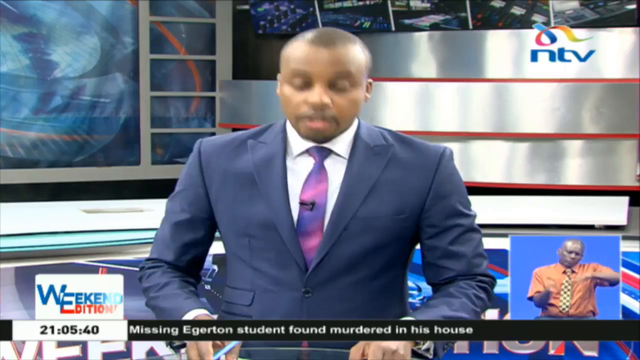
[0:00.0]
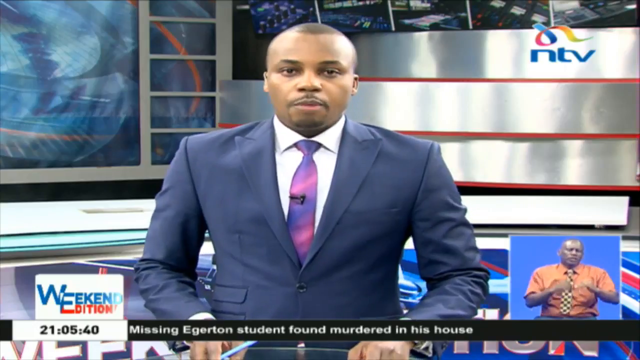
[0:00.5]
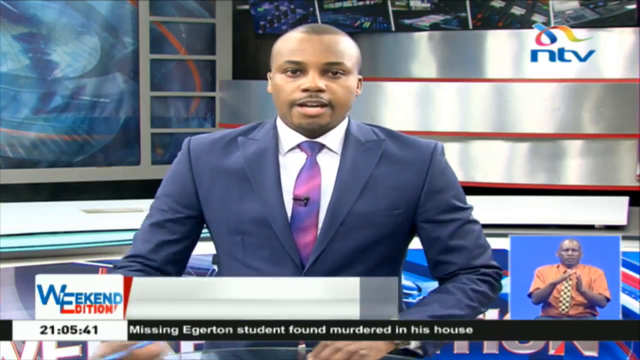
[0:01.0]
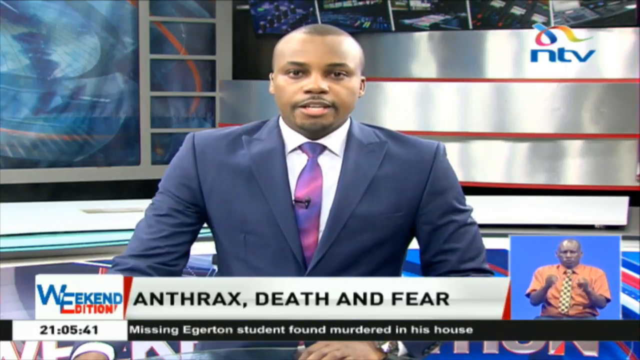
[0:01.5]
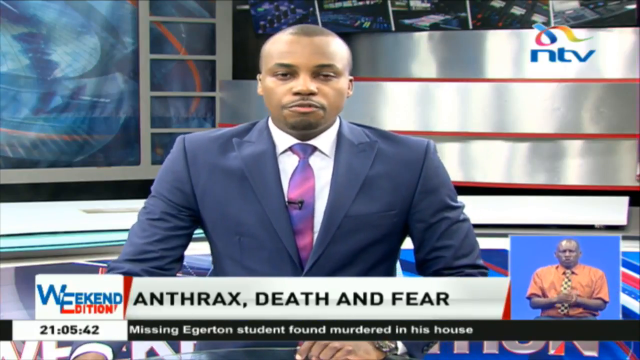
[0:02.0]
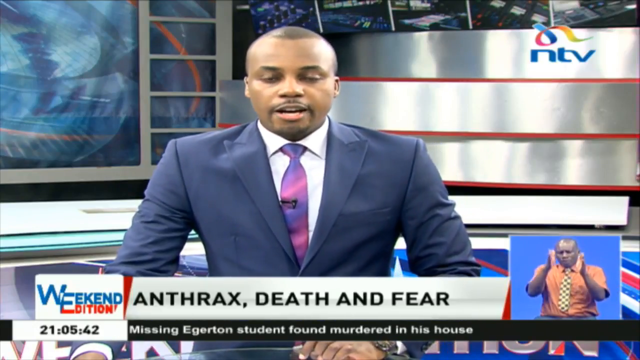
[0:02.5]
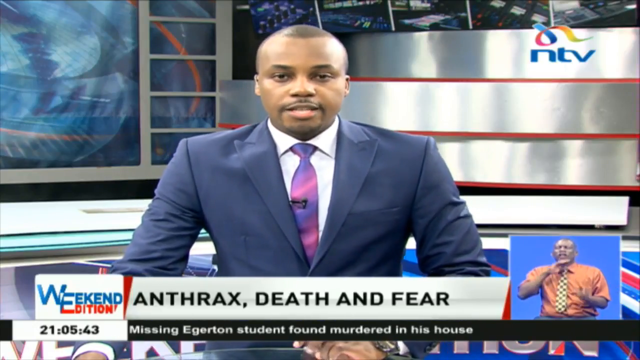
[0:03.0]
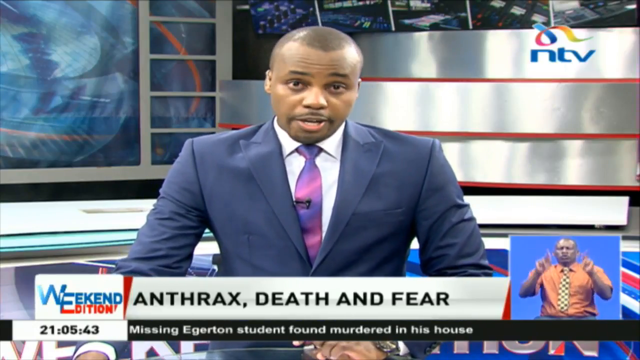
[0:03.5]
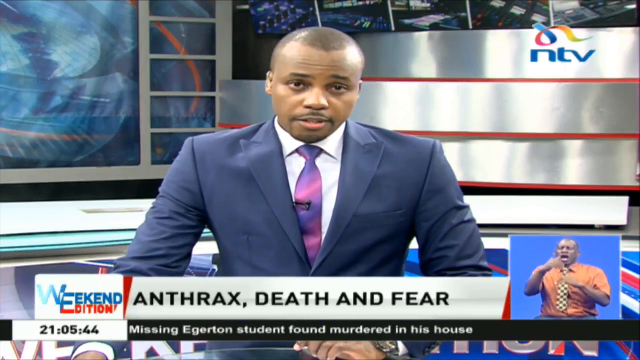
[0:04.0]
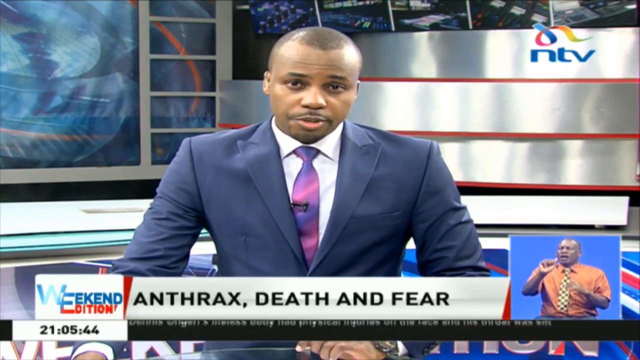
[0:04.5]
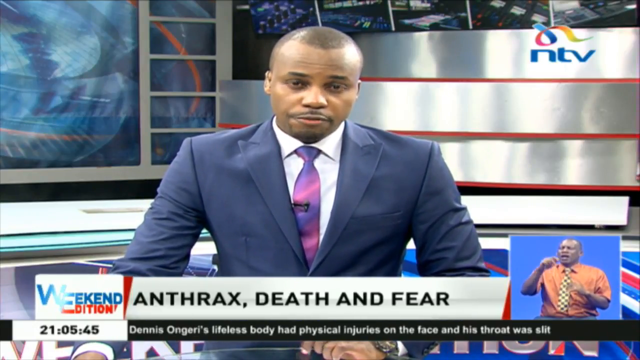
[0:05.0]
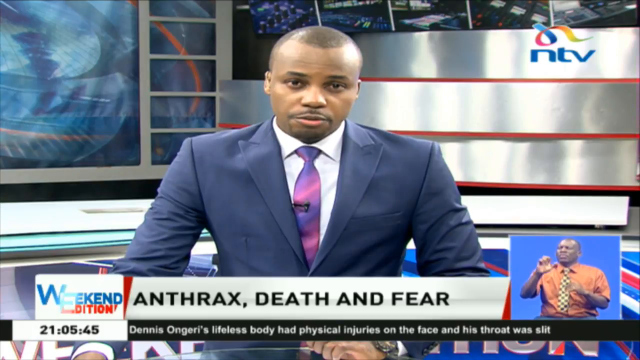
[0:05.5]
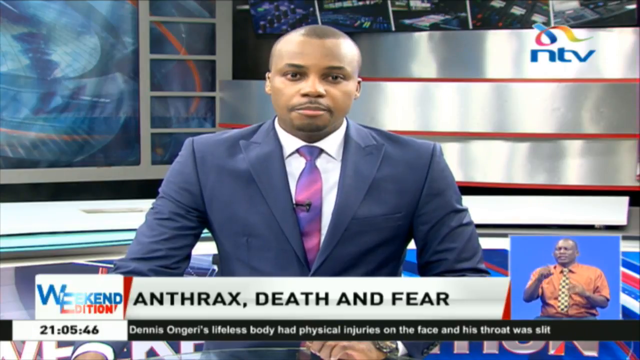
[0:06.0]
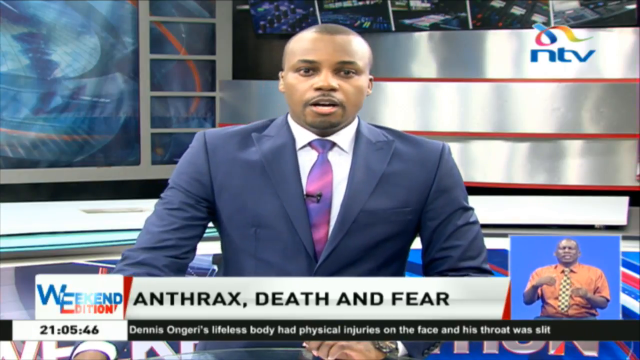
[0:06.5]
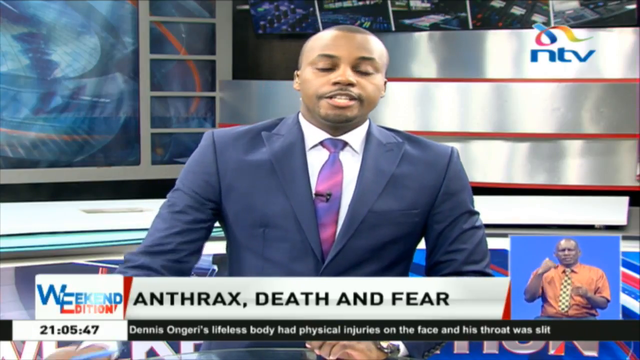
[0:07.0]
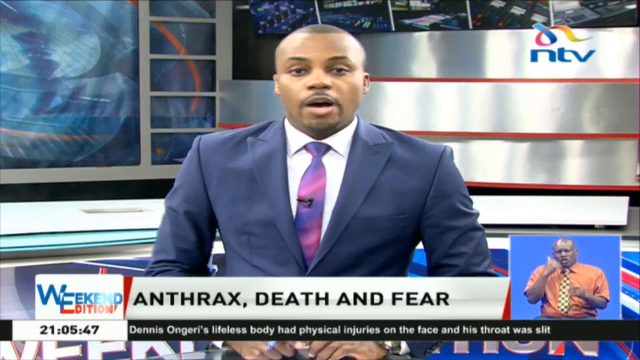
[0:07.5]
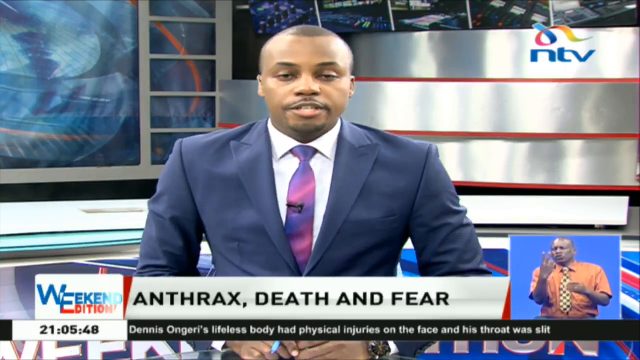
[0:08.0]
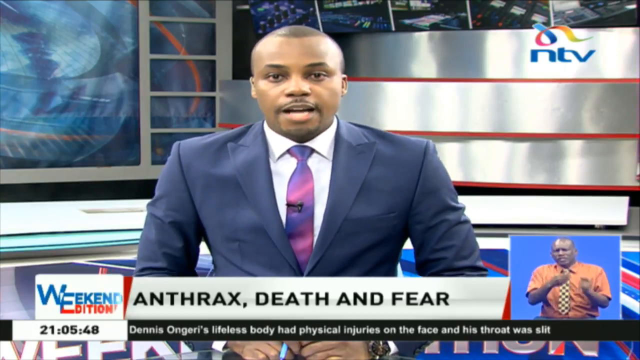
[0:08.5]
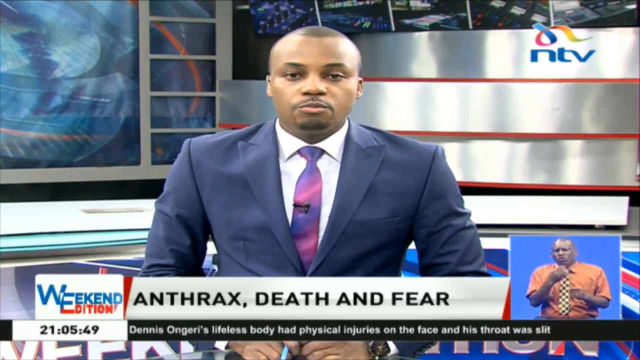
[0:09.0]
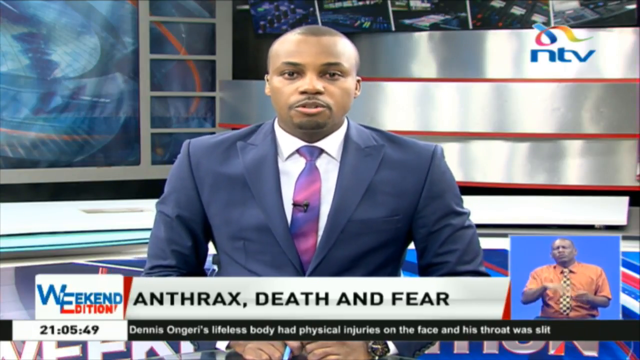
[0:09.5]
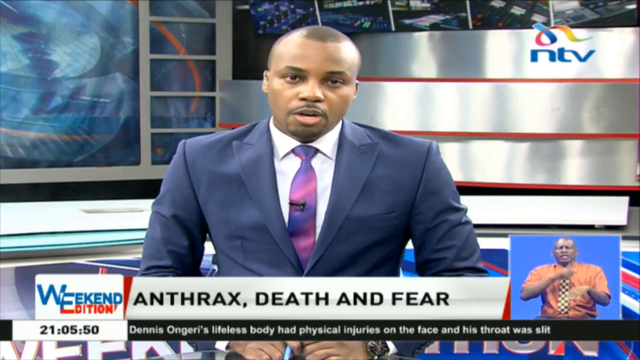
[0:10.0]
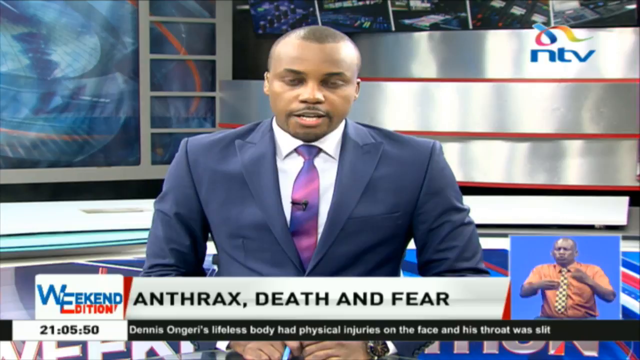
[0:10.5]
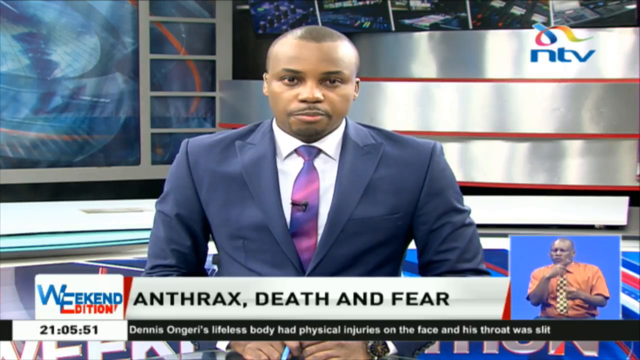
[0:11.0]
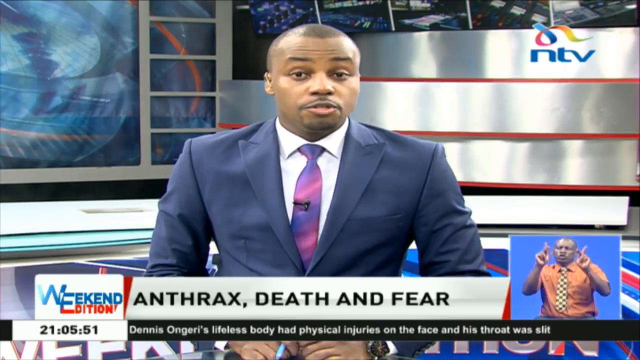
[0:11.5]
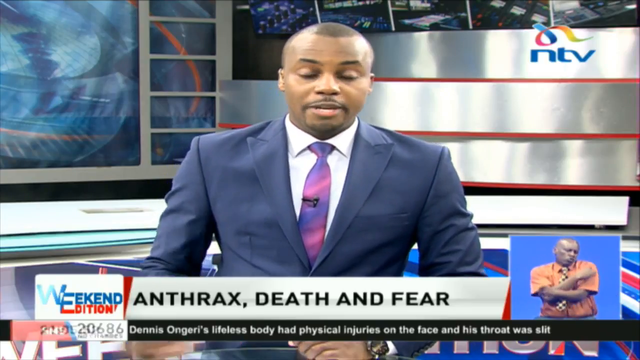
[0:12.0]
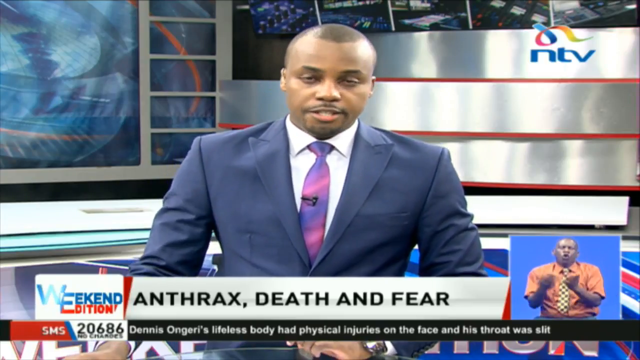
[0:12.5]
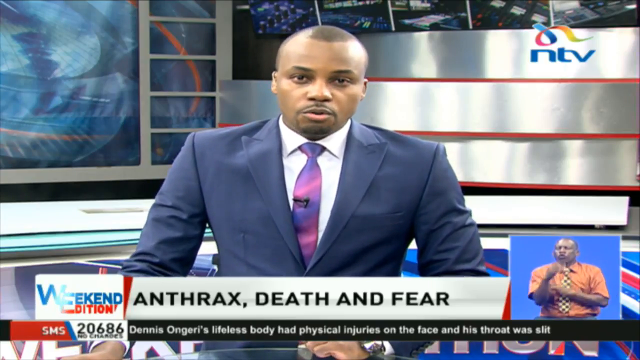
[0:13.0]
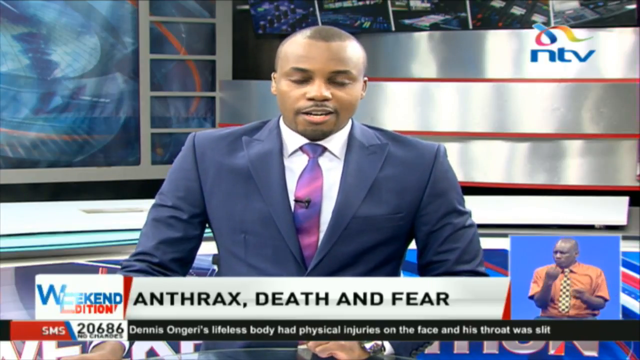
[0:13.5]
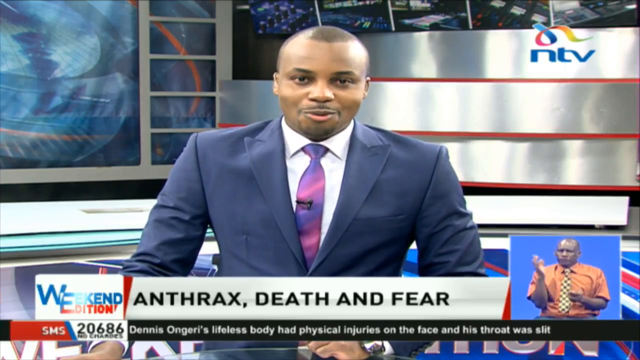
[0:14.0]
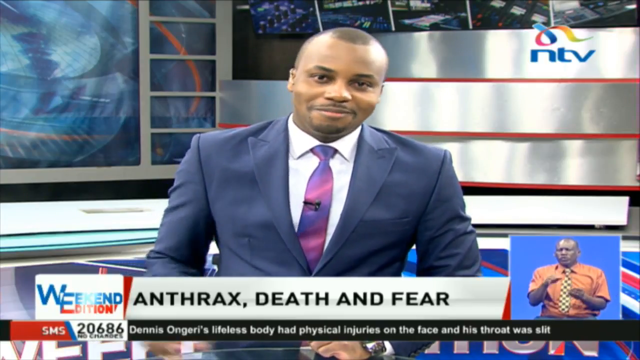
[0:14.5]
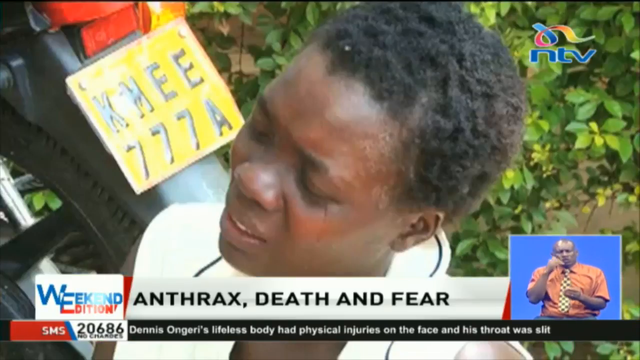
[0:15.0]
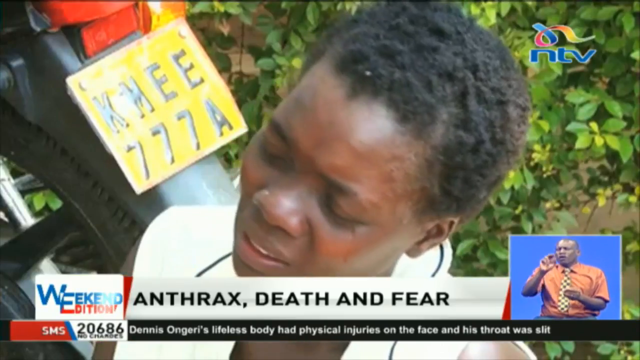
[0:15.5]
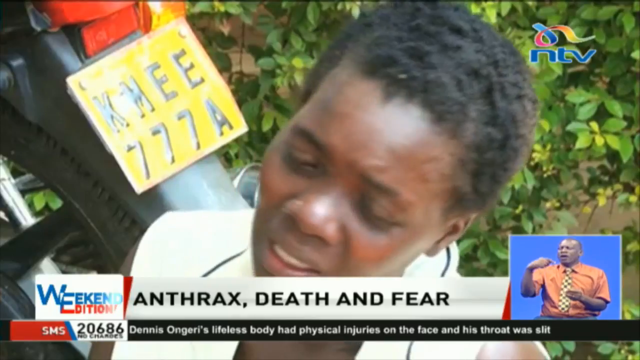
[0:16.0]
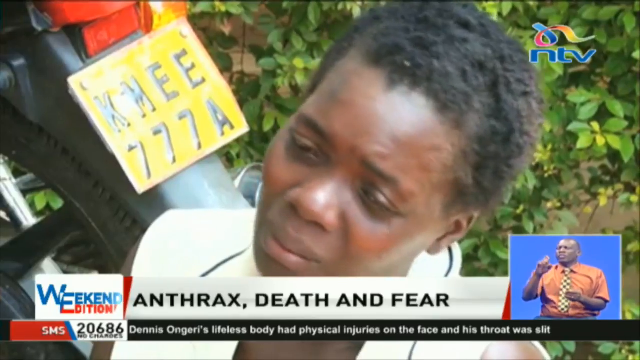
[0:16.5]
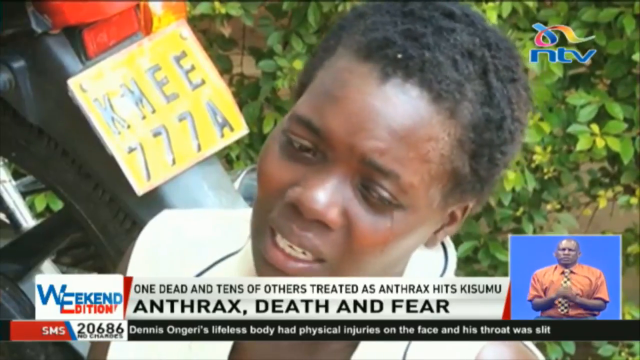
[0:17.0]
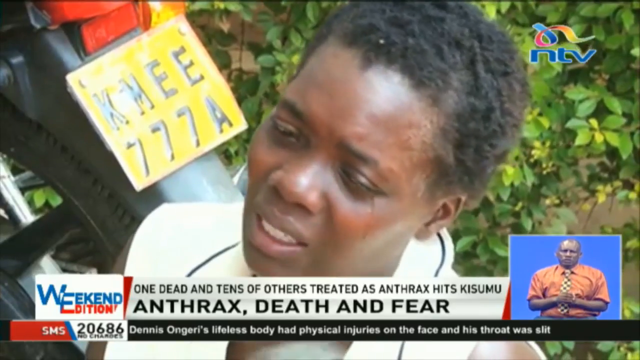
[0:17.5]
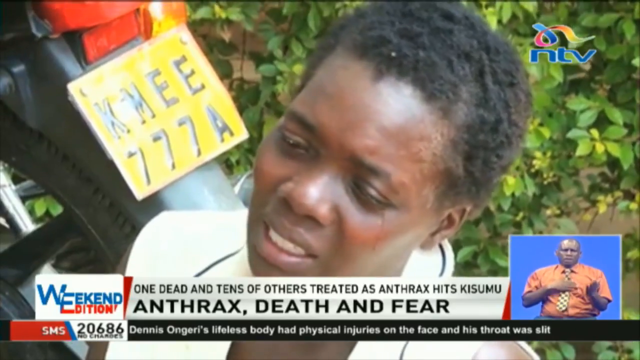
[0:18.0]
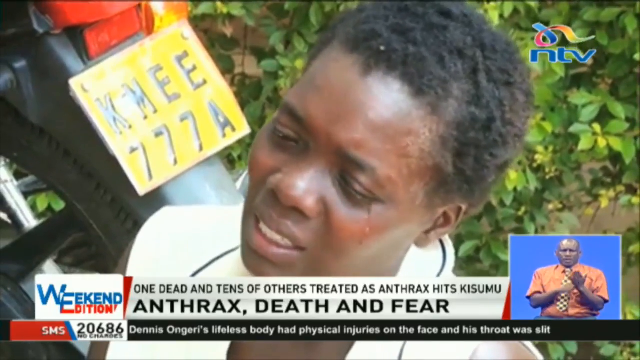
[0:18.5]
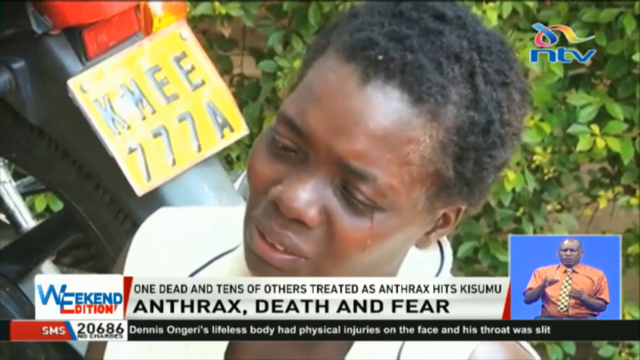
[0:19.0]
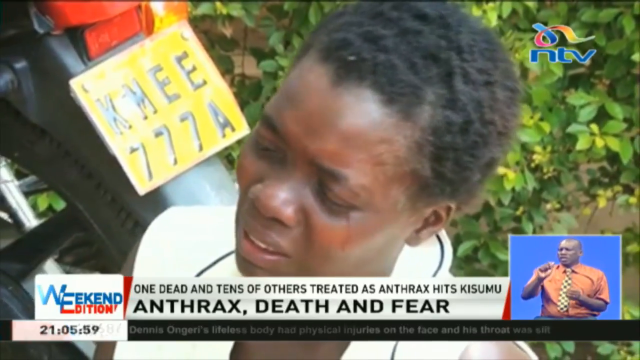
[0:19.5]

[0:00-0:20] A young African news reporter in a dark blue suit, a white button-down shirt and a purple and pink tie is behind a news desk. In the top right-hand corner of the screen is "NTV", and in the bottom left-hand corner is "Weekend Edition". Next to that is a white rectangular box with black text reading "Anthrax, Death, and Fear". In a small square frame in the bottom right corner, a man in a short-sleeved orange button-up shirt and a yellow and black checkerboard tie sits in front of a blue background doing sign language. The reporter talks to the camera as he introduces the news story. The video then shows a close-up of an African woman's face; she has short black hair, looks very upset, and is sort of sitting on the ground next to a motorcycle.